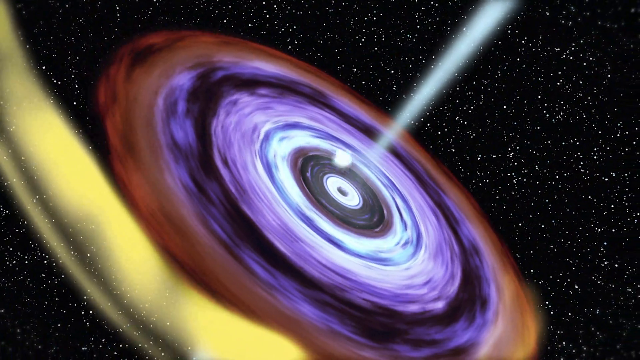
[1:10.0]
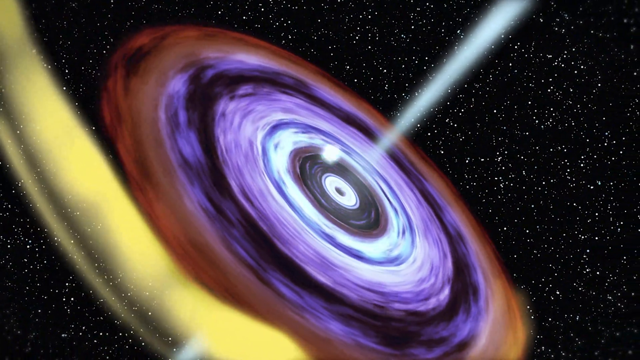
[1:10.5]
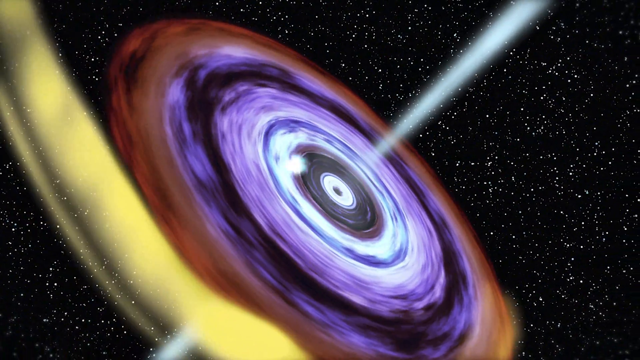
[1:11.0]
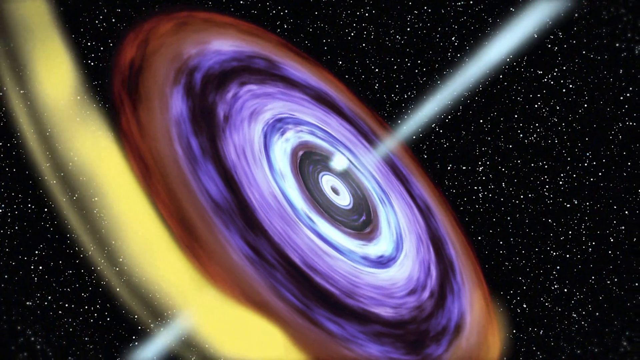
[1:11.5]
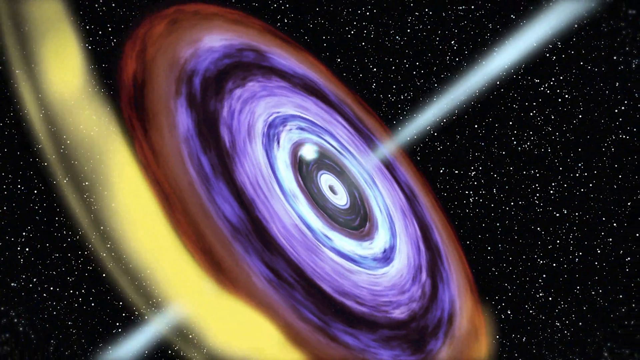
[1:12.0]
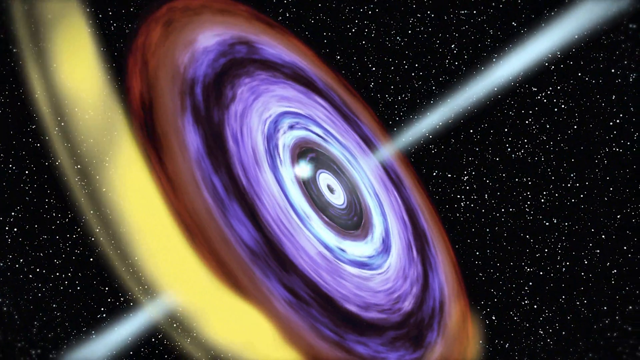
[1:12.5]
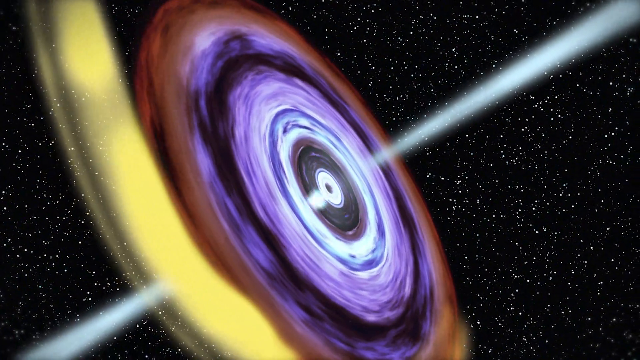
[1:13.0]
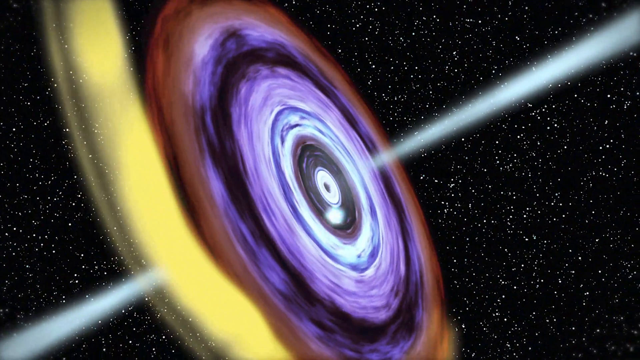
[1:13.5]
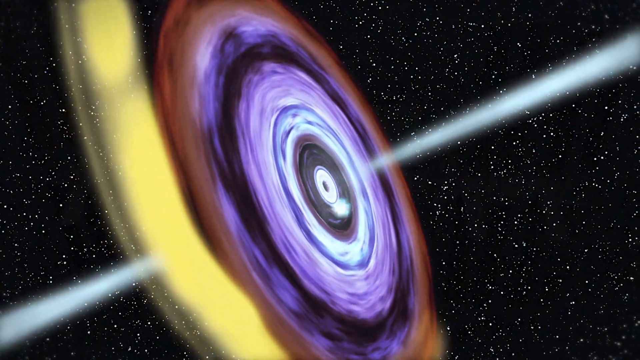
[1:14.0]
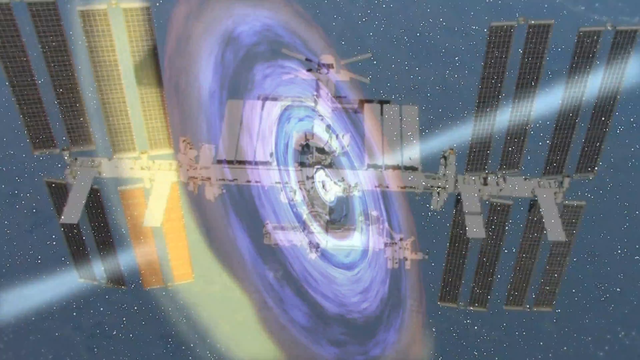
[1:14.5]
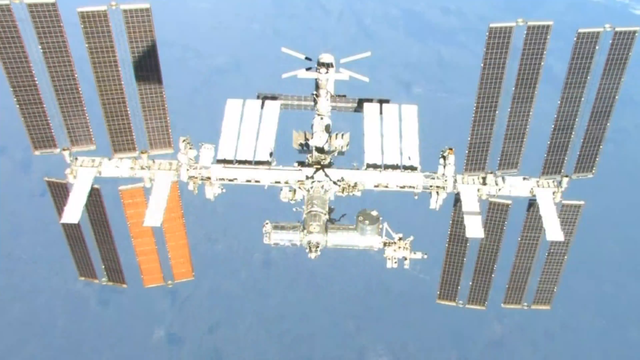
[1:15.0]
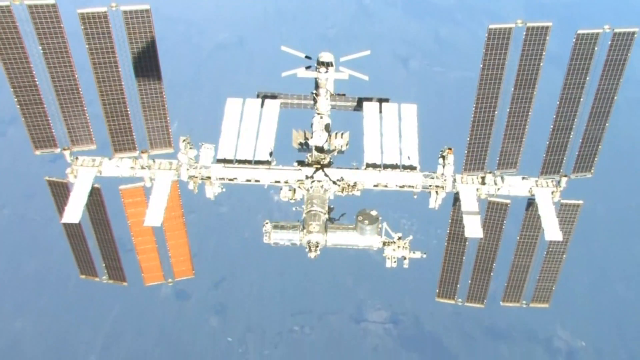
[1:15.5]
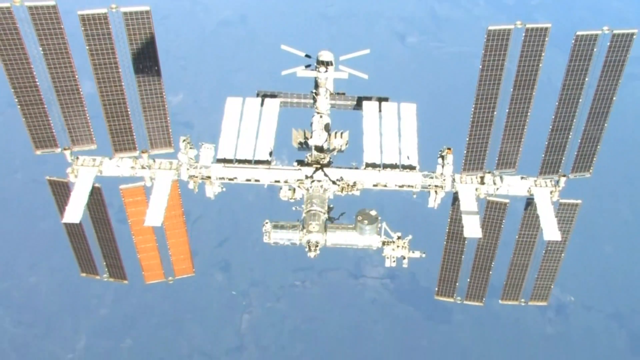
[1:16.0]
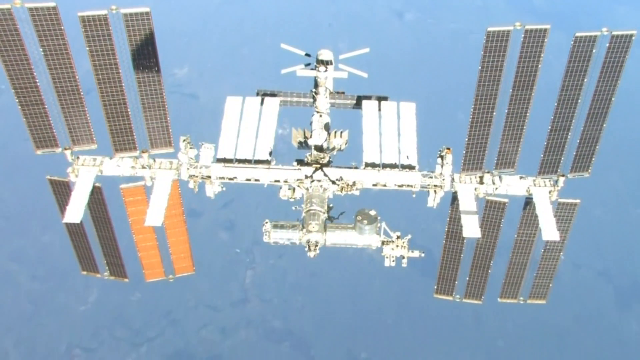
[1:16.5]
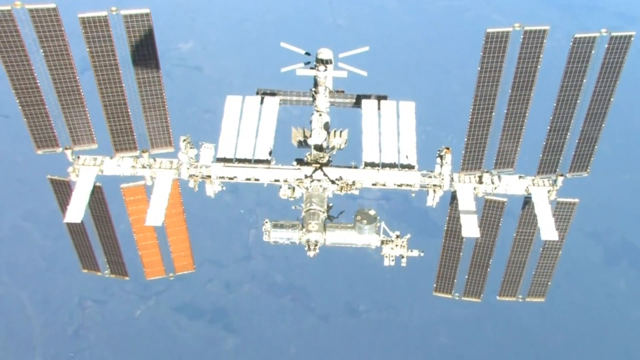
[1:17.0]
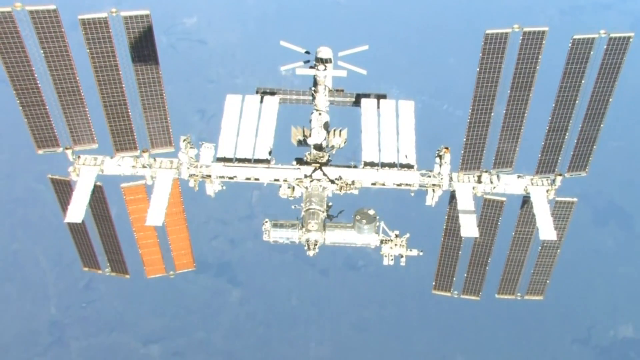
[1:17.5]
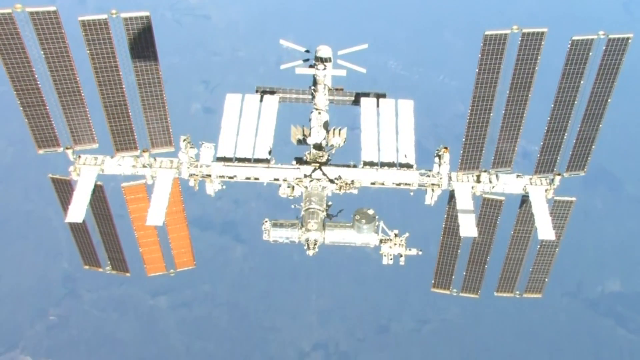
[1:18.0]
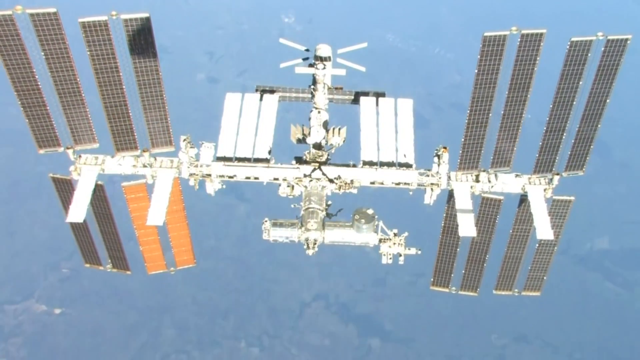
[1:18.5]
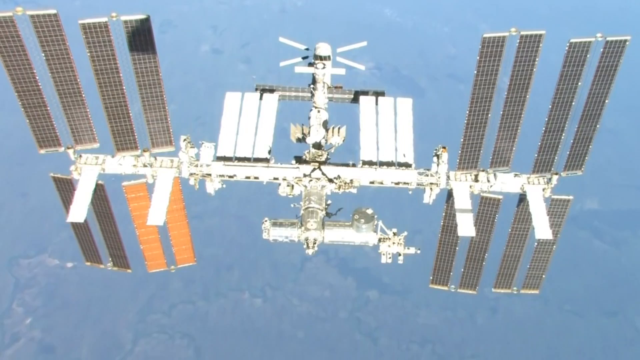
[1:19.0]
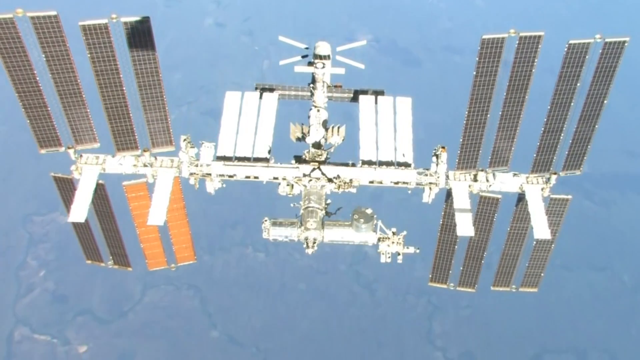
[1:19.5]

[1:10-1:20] A close-up shows the spinning disc attached by a gold loop to the orange planet; initially only the disc is visible. The white ball at the centre of the disc rotates and increases in speed. Light appears to come from the central point of the disc, which looks like a classic record. The ball gradually moves towards the centre. The screen then fades to a picture of a satellite that appears to be moving in the sky. The satellite has 16 solar panels, or what looks to be solar panels, attached to its main body.